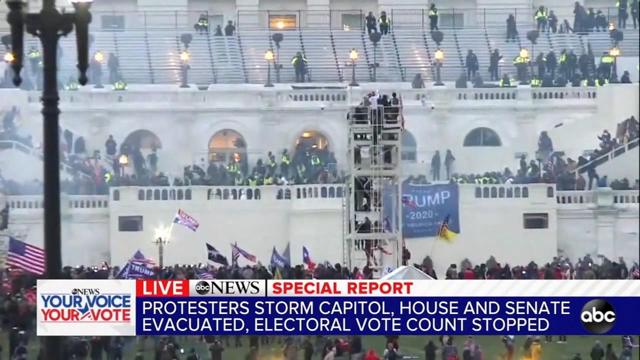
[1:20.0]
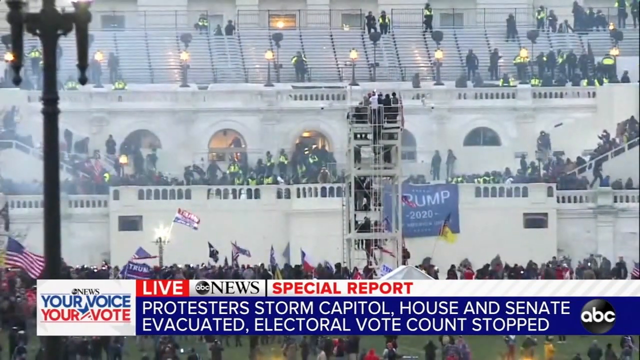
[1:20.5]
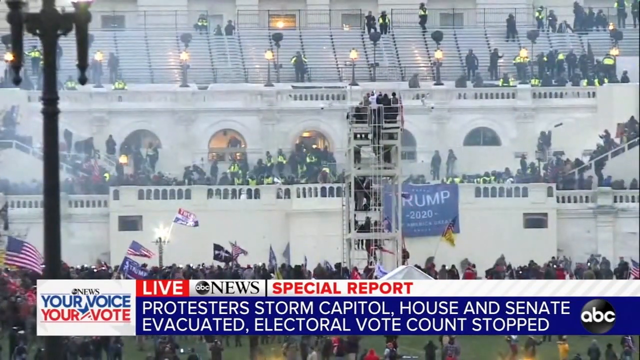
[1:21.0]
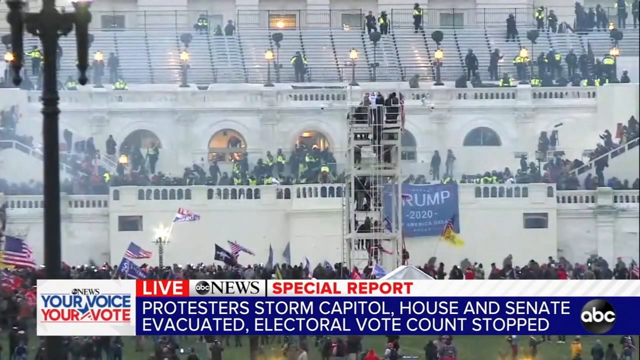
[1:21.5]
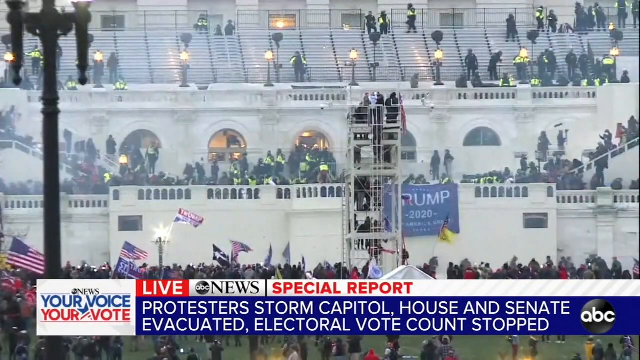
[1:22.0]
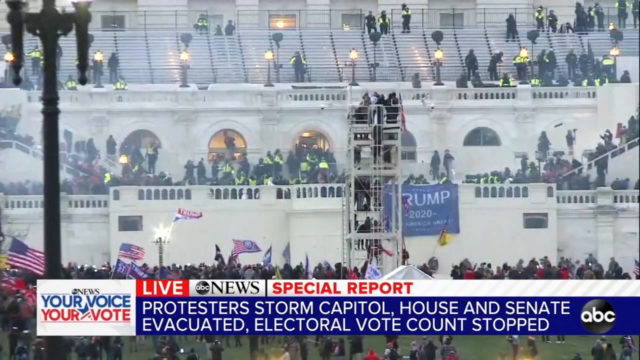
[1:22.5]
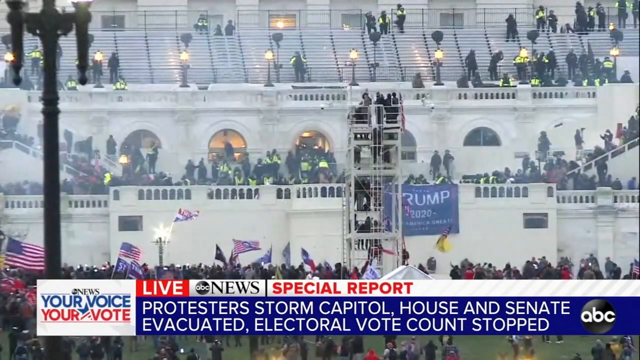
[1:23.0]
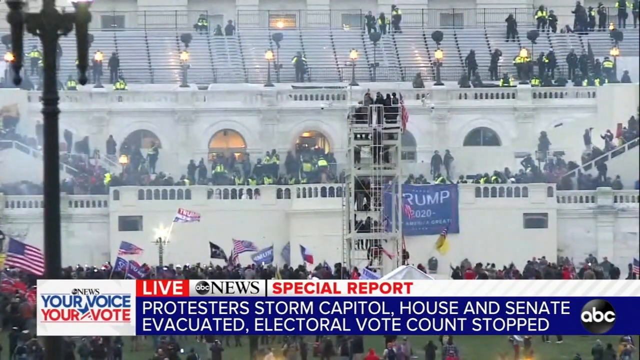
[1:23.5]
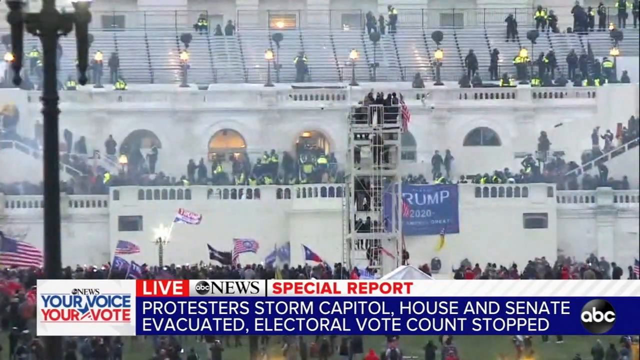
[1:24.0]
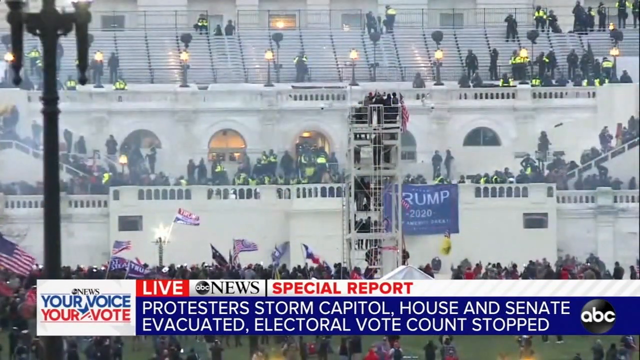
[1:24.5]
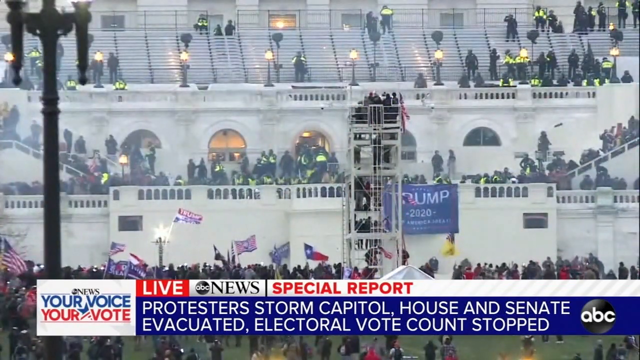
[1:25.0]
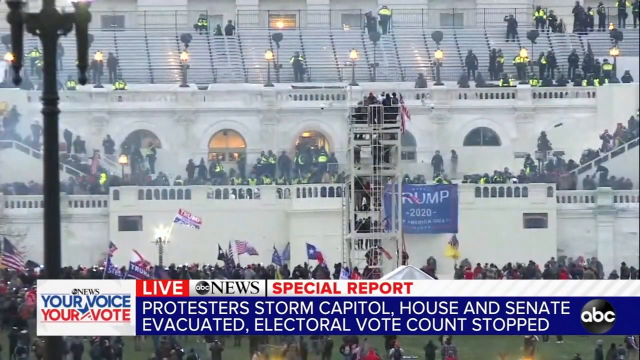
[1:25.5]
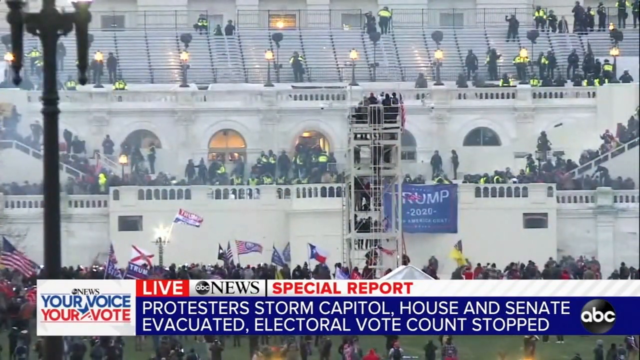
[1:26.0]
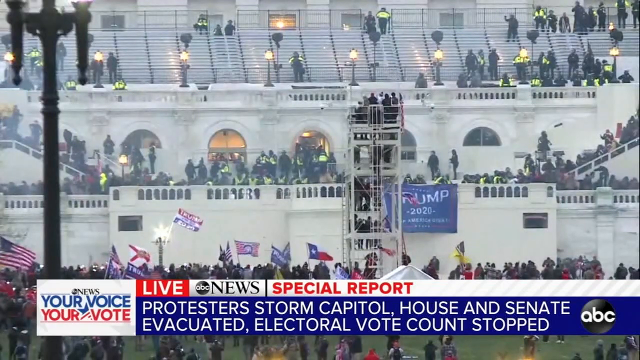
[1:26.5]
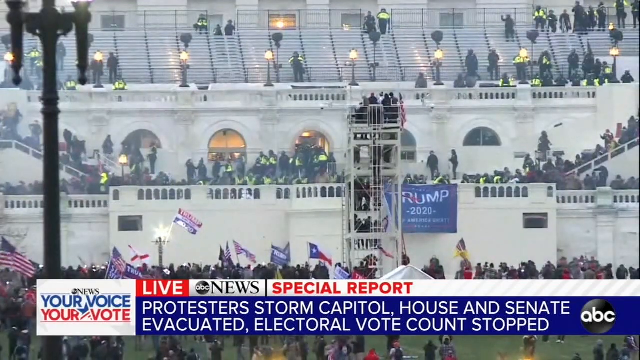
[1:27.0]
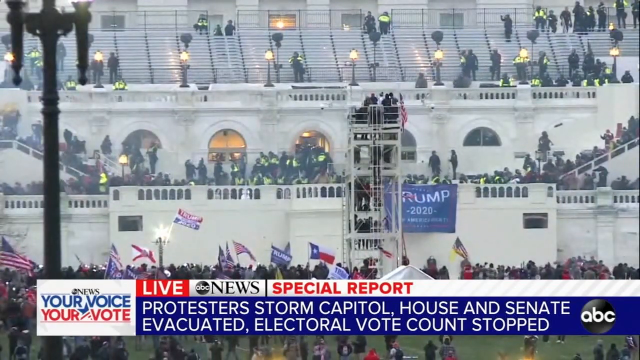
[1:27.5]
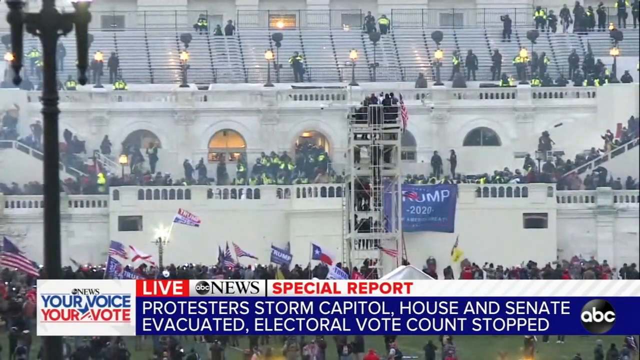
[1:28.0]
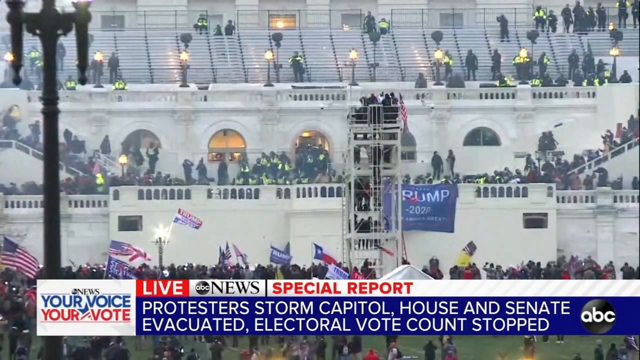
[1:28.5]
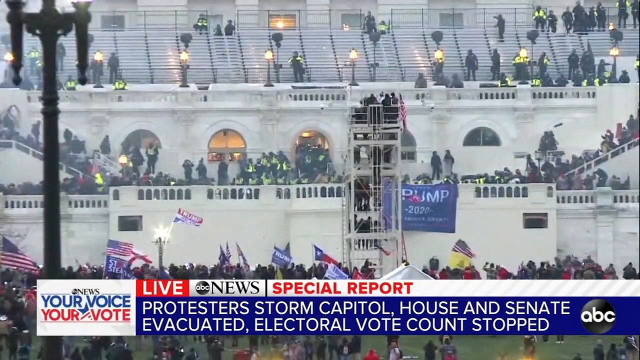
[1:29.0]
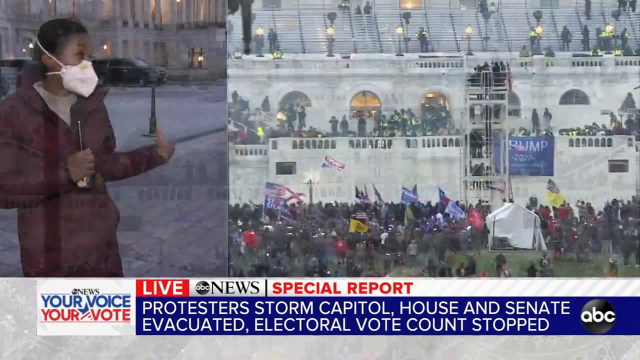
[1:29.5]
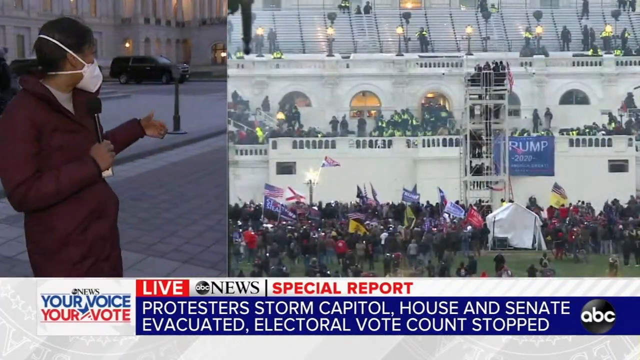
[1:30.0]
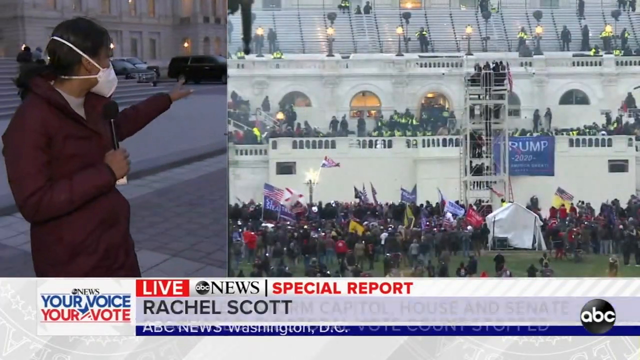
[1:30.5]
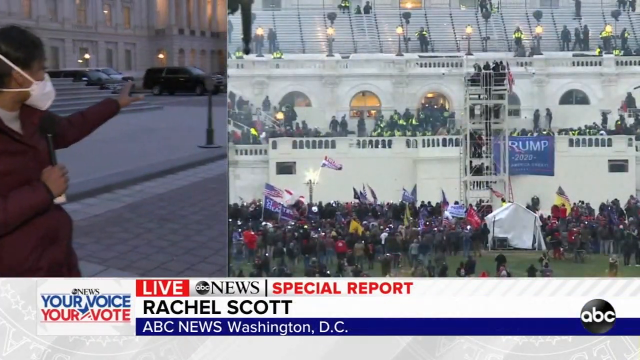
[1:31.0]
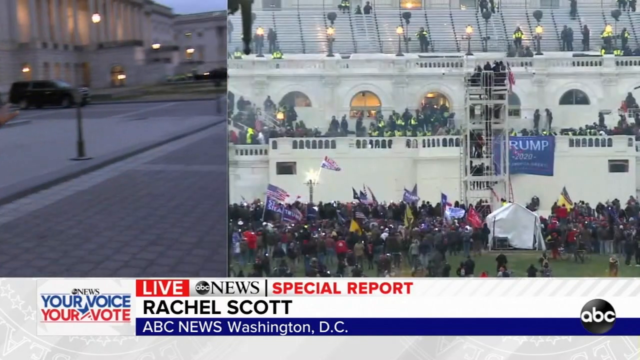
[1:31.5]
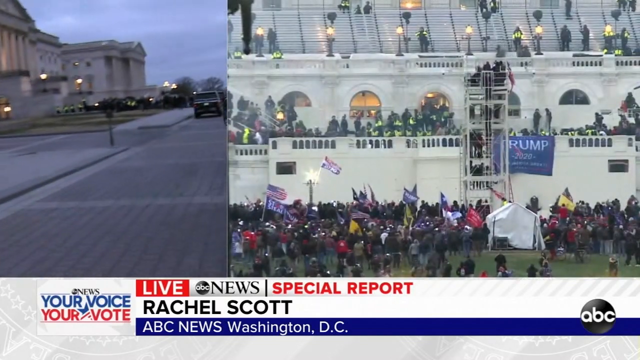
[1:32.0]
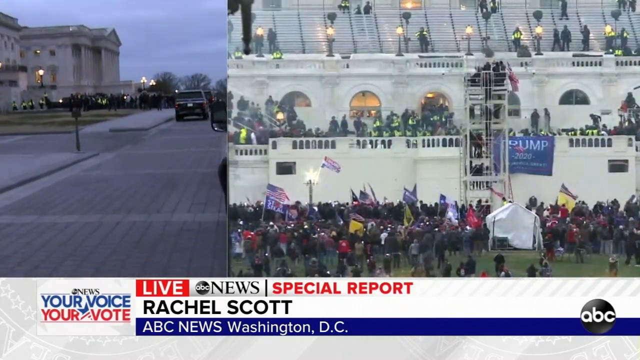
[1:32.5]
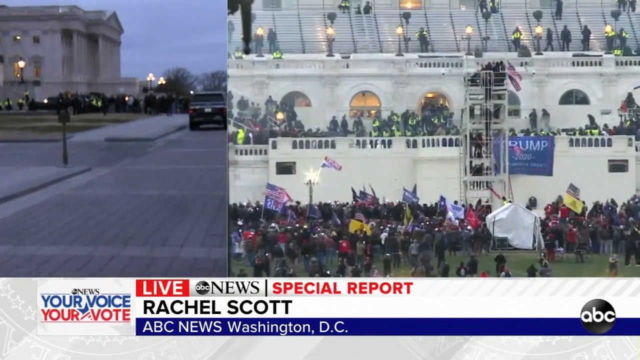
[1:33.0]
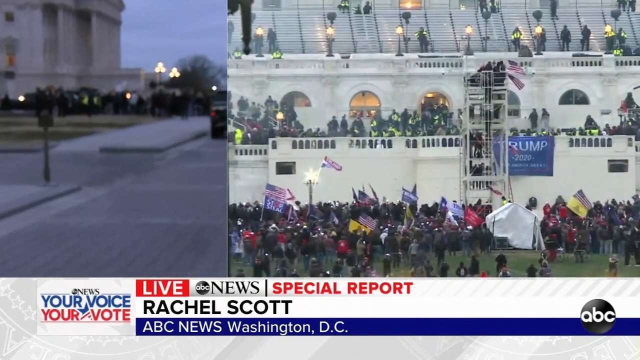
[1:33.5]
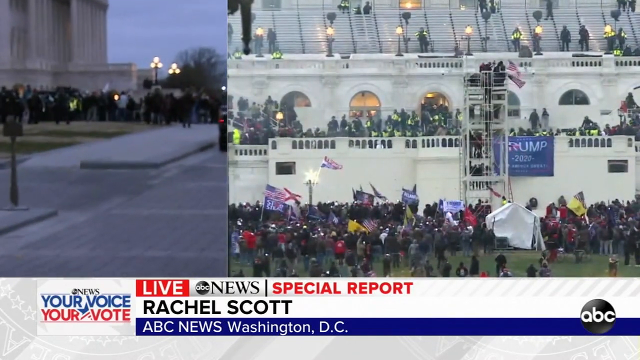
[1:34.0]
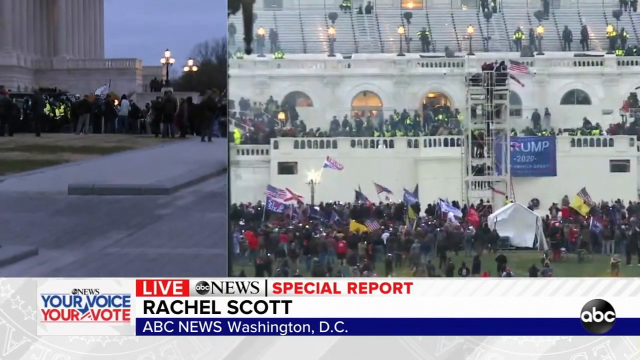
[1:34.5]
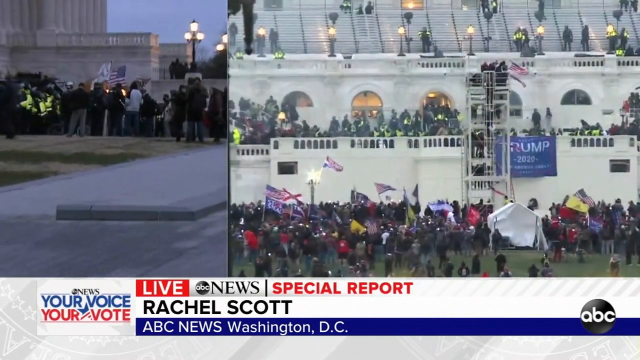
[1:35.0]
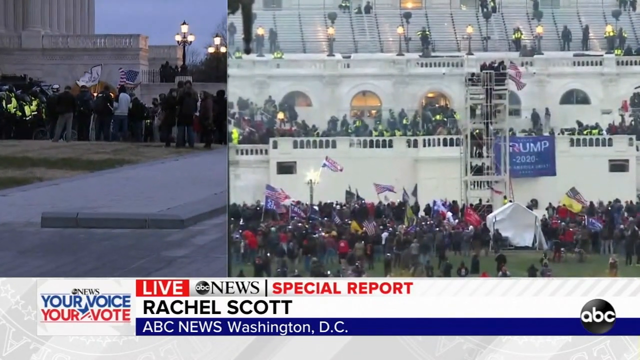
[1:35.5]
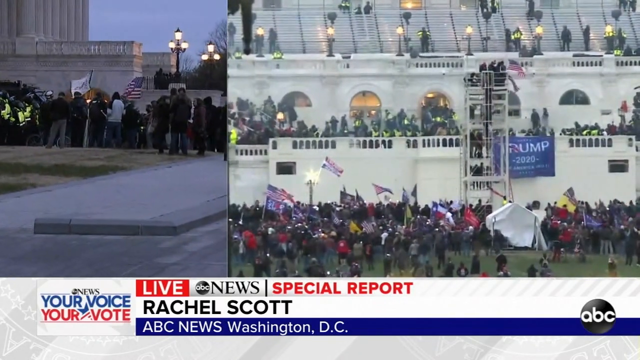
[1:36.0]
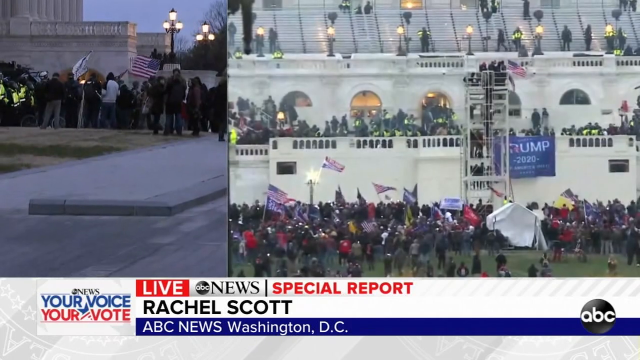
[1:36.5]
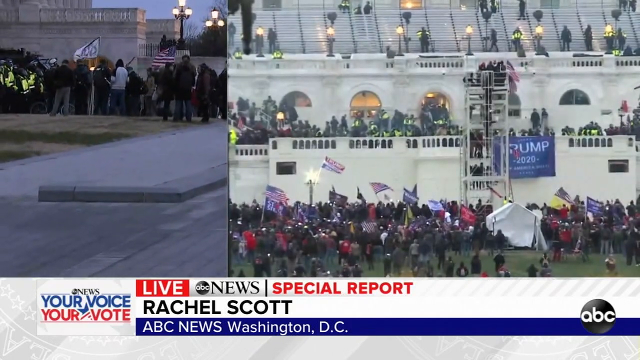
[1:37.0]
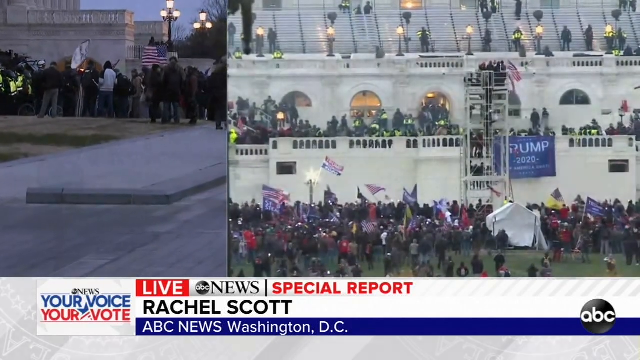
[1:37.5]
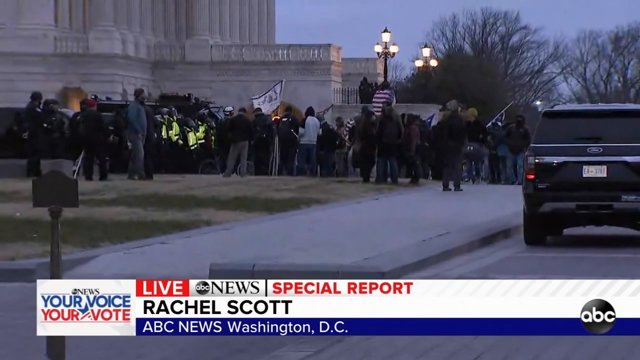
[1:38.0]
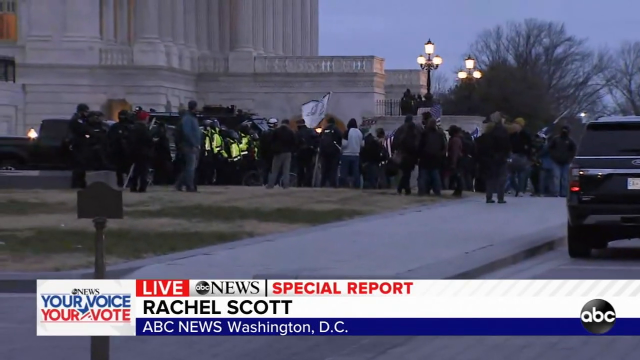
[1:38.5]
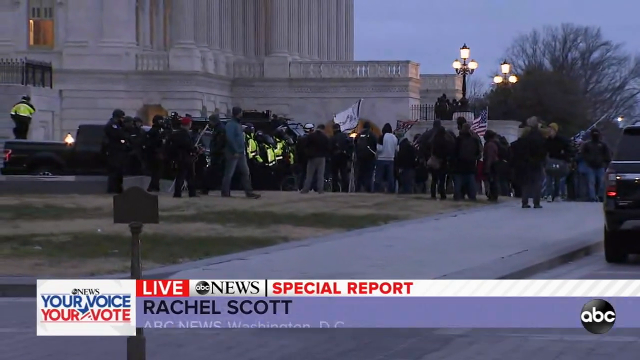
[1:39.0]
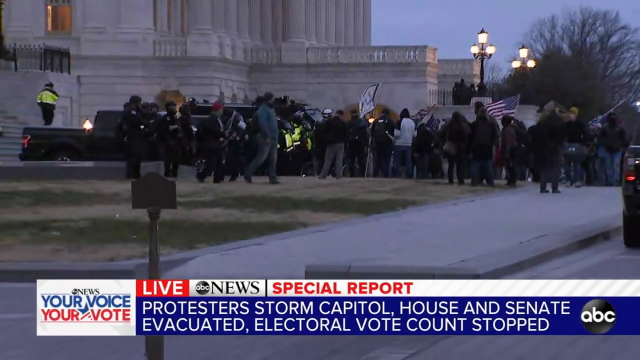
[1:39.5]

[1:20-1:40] People are chanting outside the stadium and holding flags. On the right, there are people holding pads and flags. The reporter is live, and it looks like Donald Trump is outside. The crowd seems to be out of control, and police are watching to keep people safe. People are standing outside the White House, and people are standing in line.